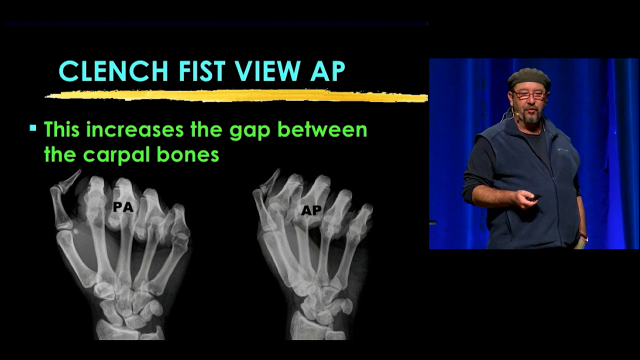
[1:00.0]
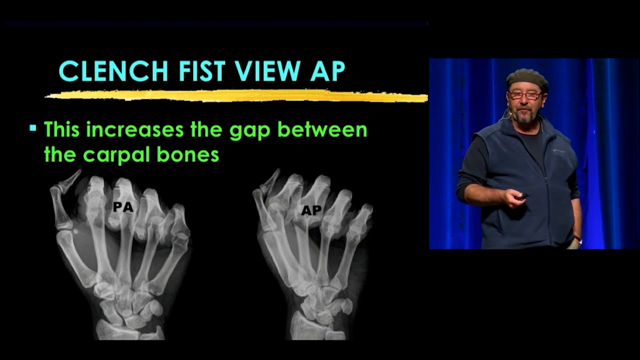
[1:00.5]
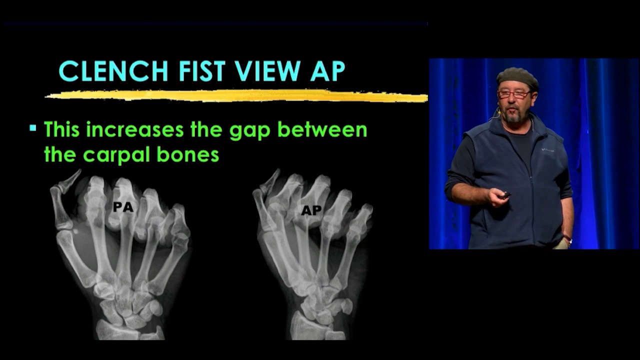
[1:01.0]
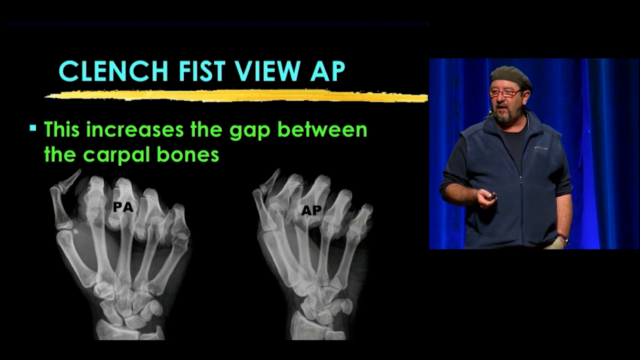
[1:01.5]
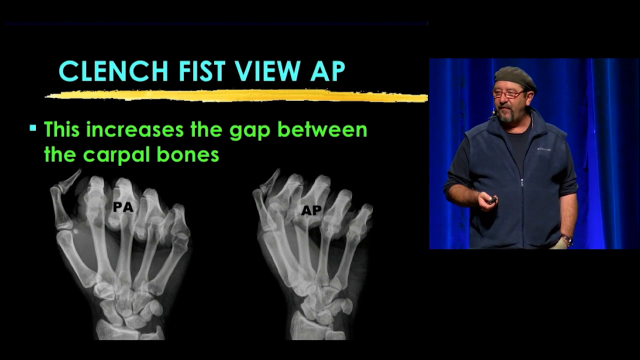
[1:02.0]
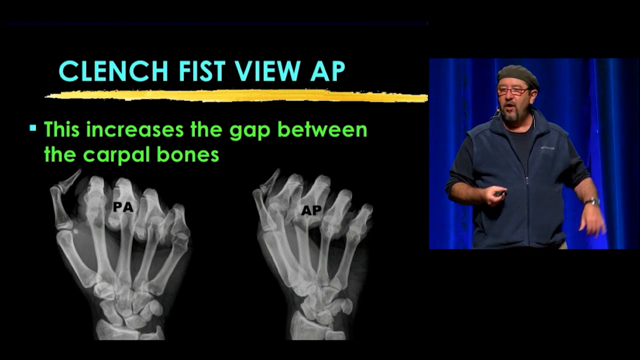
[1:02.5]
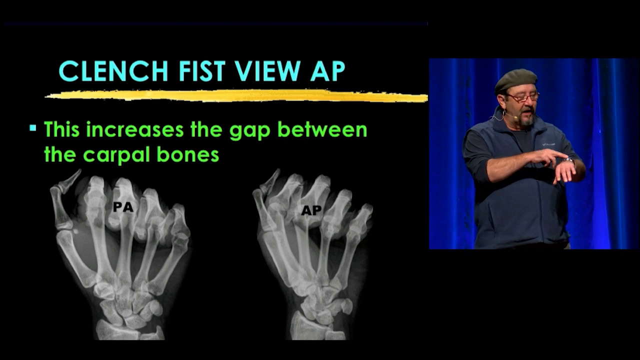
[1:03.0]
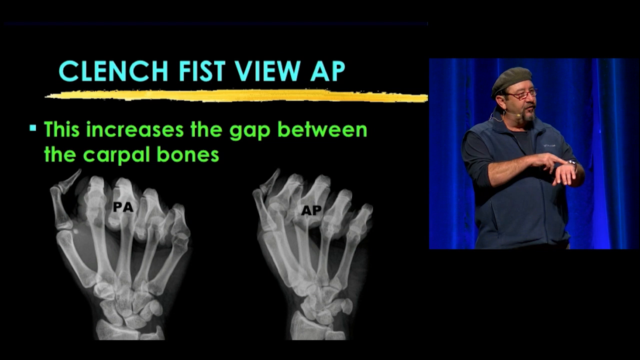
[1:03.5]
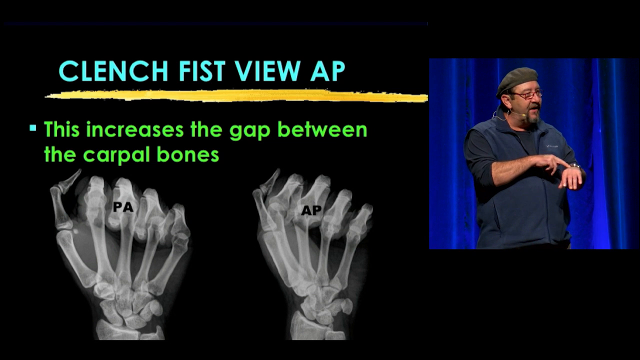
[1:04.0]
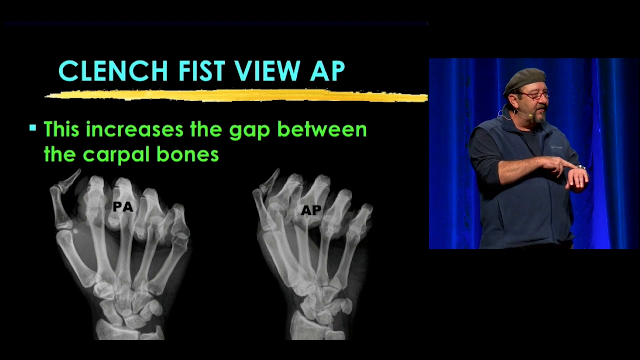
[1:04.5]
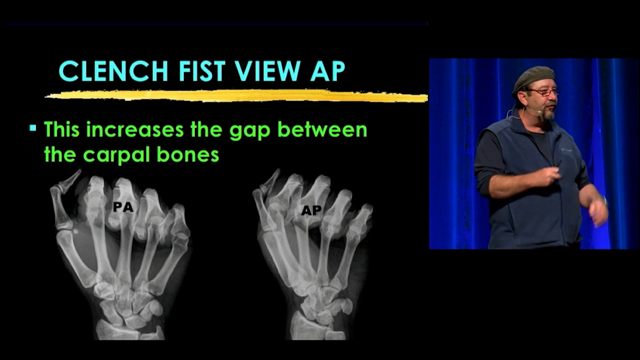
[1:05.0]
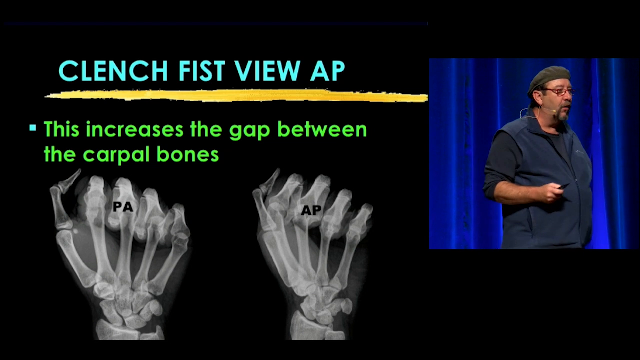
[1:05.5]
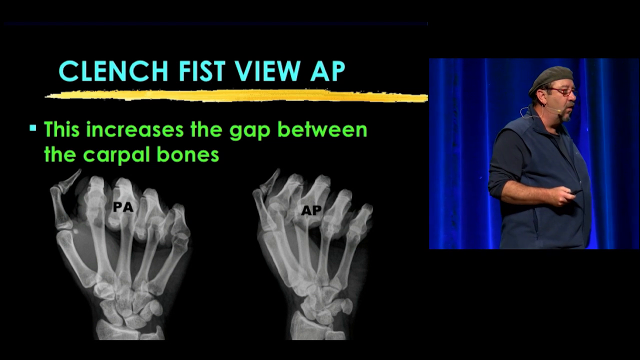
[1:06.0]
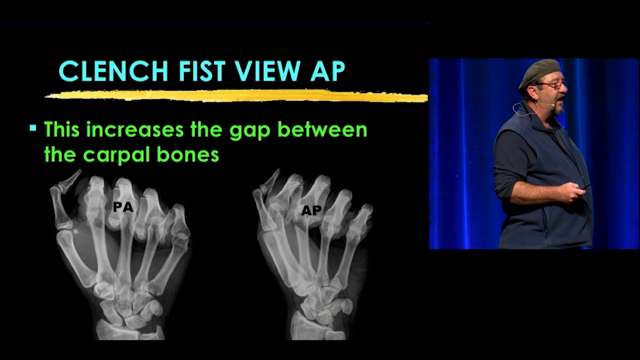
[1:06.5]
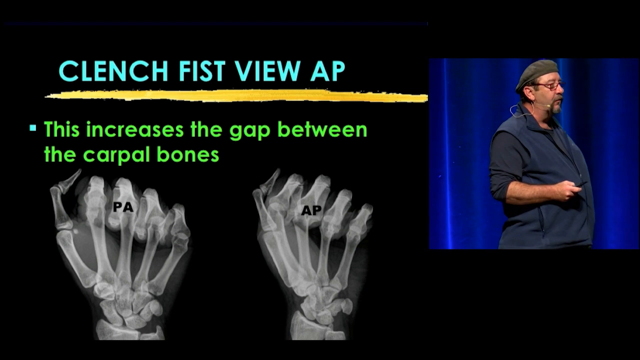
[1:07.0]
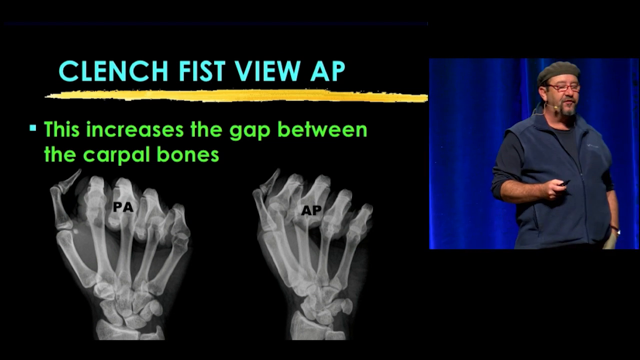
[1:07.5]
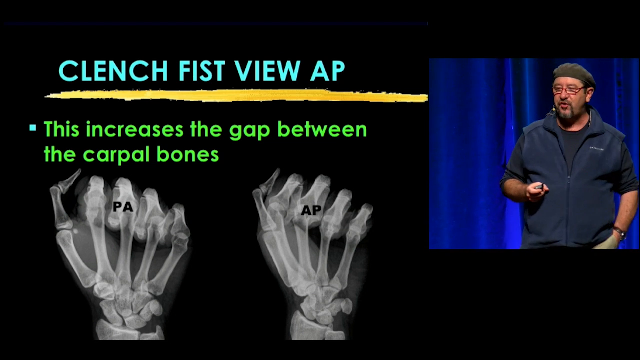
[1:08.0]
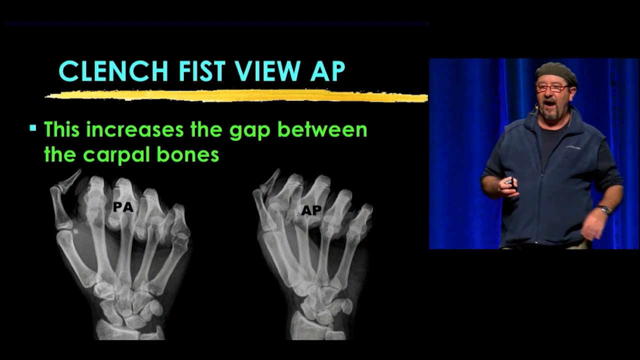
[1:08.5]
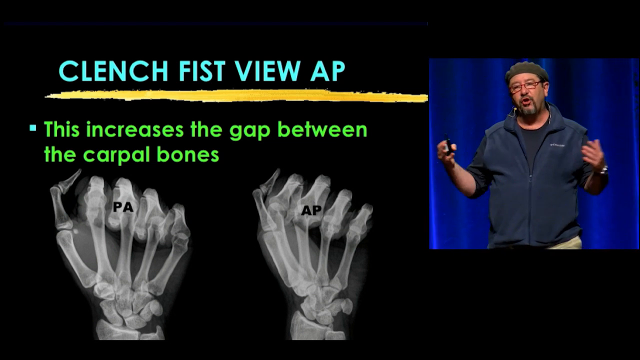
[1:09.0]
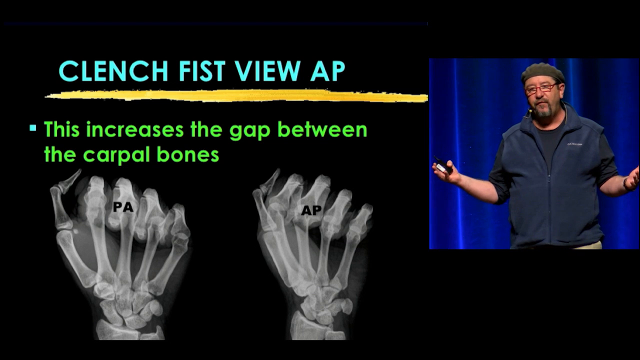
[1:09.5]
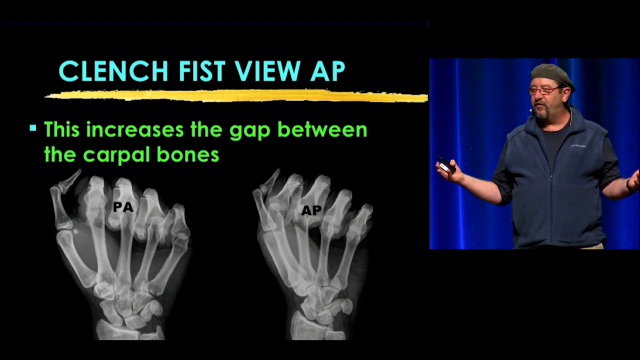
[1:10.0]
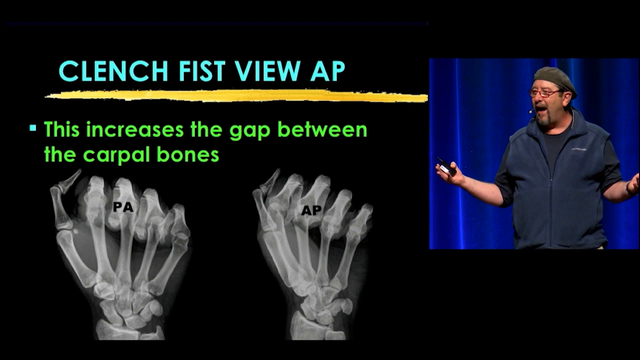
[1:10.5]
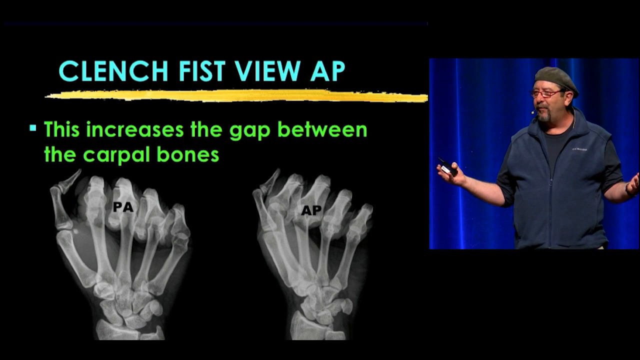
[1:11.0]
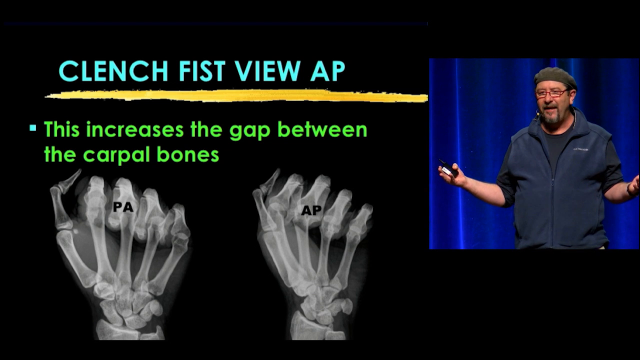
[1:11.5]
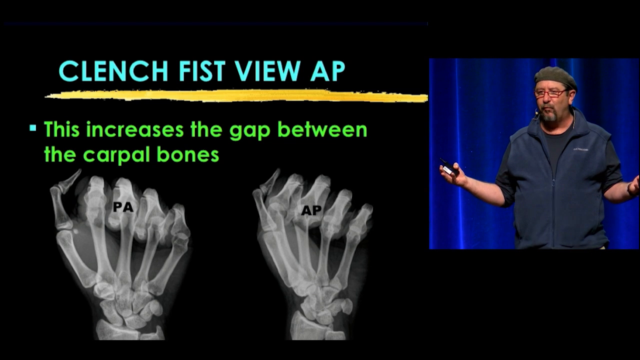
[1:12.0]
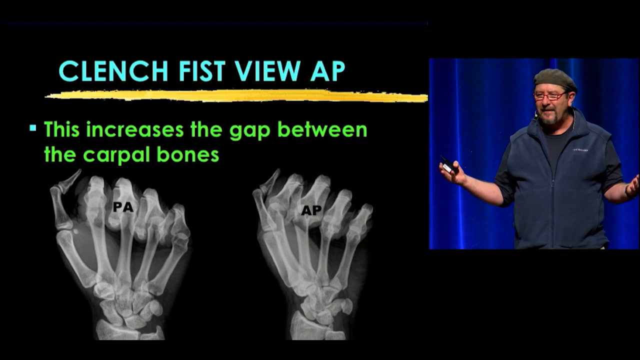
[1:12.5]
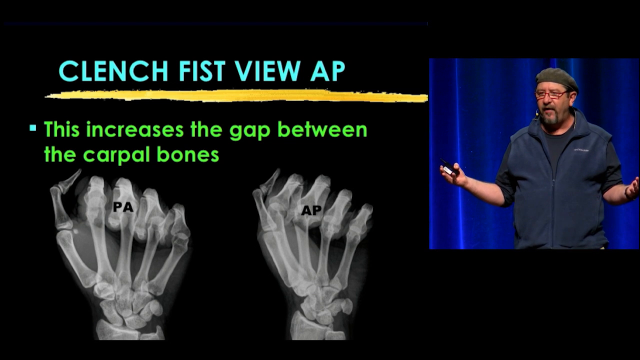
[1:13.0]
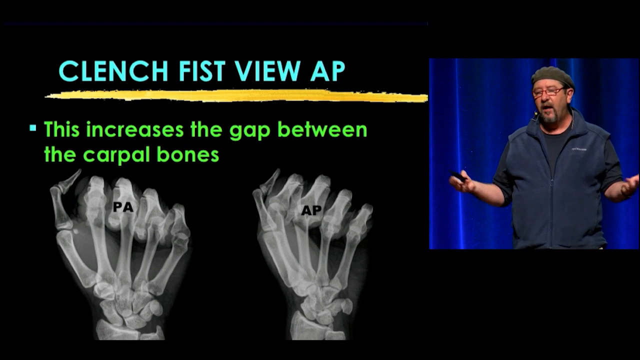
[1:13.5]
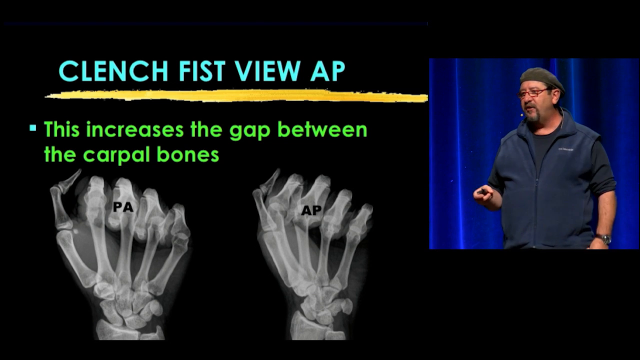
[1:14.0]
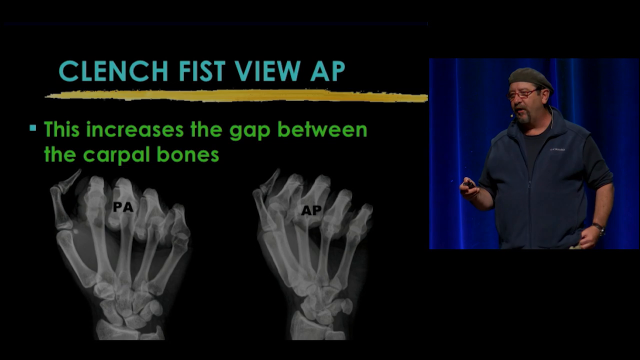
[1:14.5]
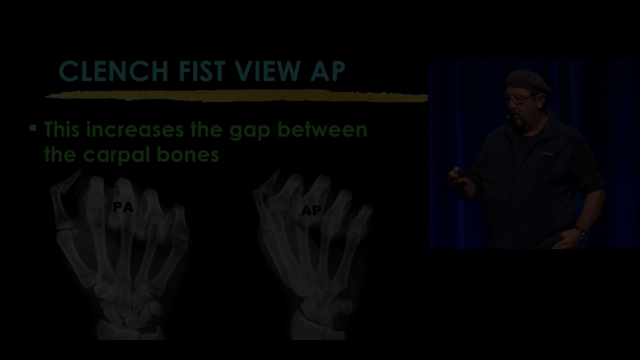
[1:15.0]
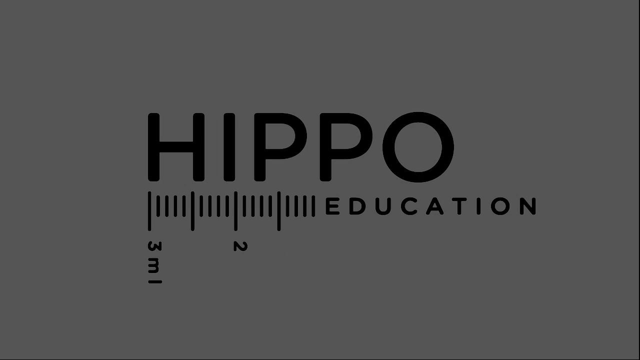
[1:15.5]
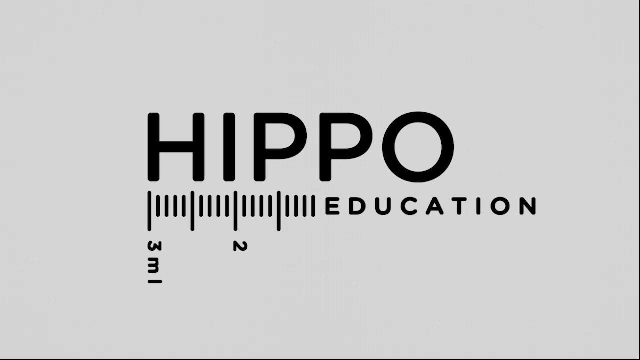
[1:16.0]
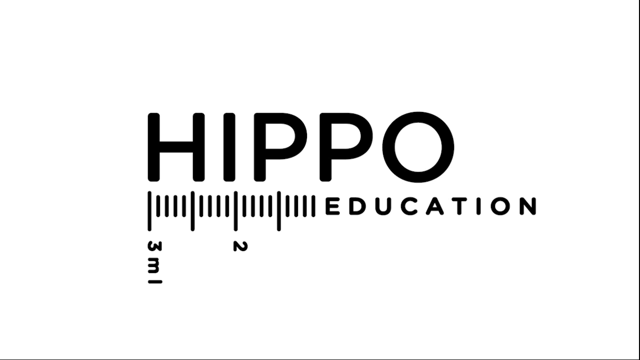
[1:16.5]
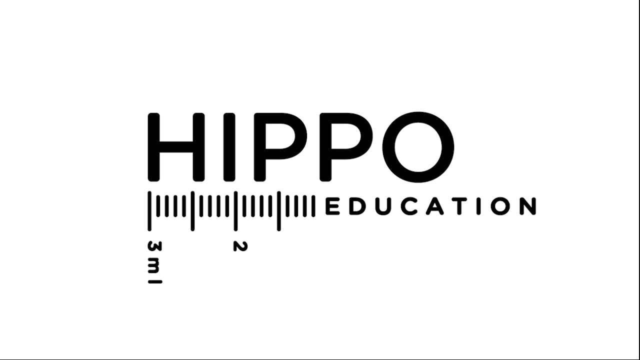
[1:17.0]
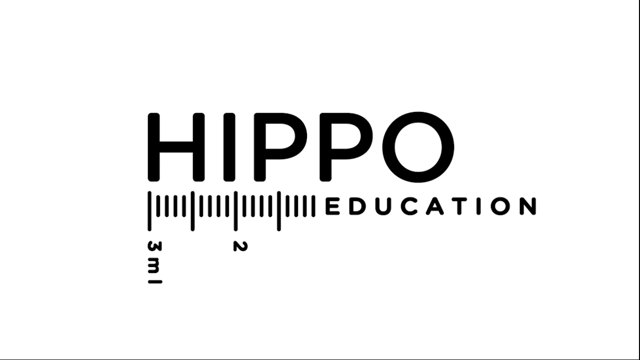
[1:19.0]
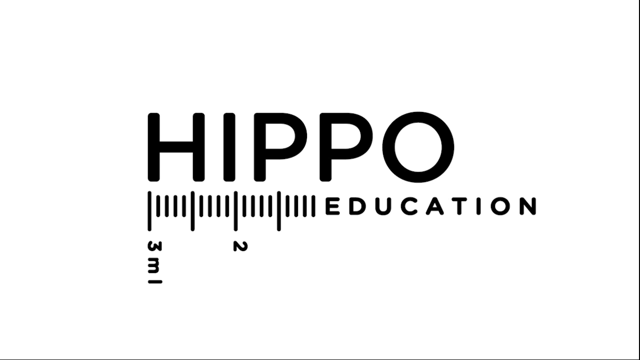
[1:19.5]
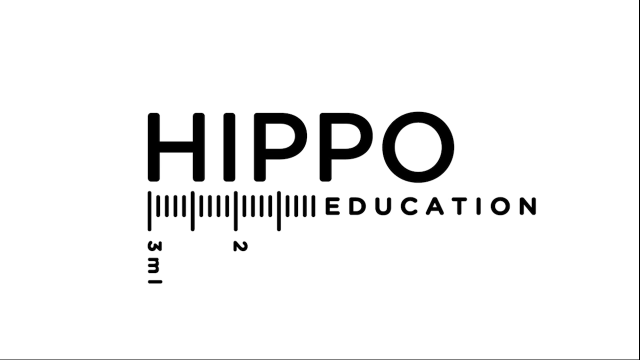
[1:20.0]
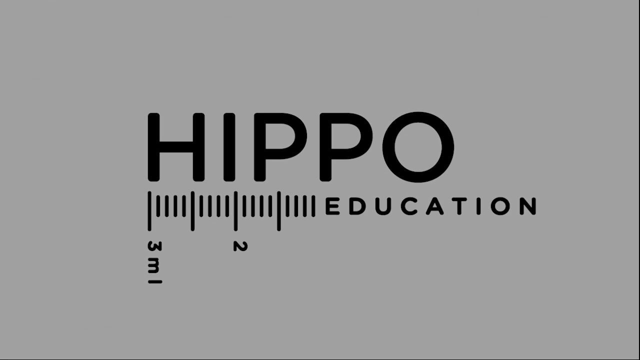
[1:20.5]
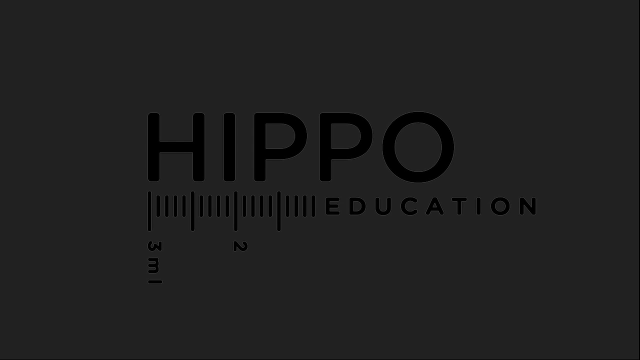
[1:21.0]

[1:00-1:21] The host points with his right hand at his left hand around the wrist area, then goes back to holding the remote control. He shrugs for a few seconds with his arms out, then puts one hand in his pocket while the other holds the remote control. The camera does not zoom out and stays focused on him on the stage. The video fades to black, and the ending credits are from Hippo Education. The part of the line before "education" looks like measurement numbers on a ruler, with the units ml, or milliliters, and the numbers three and two, all in black. The picture then fades to black.